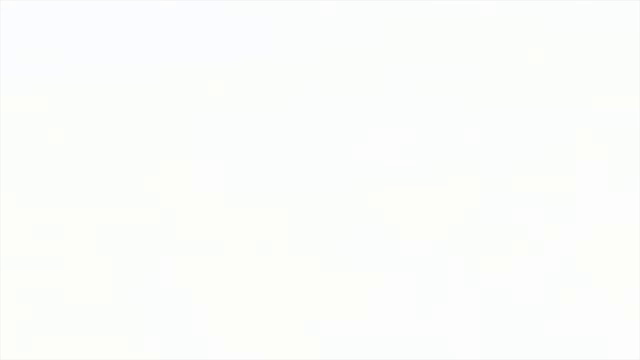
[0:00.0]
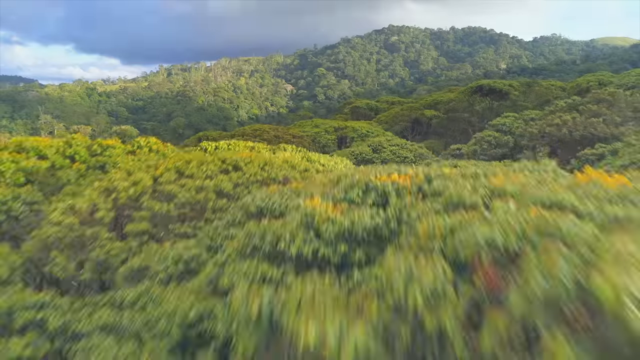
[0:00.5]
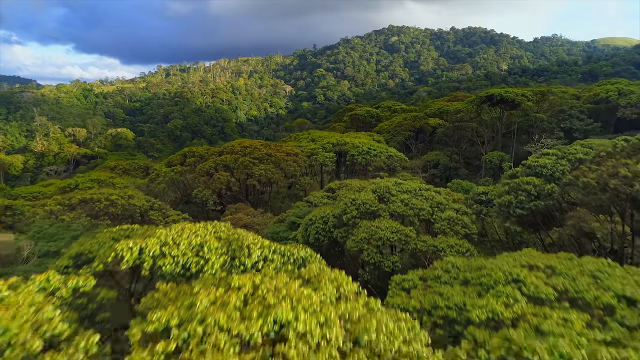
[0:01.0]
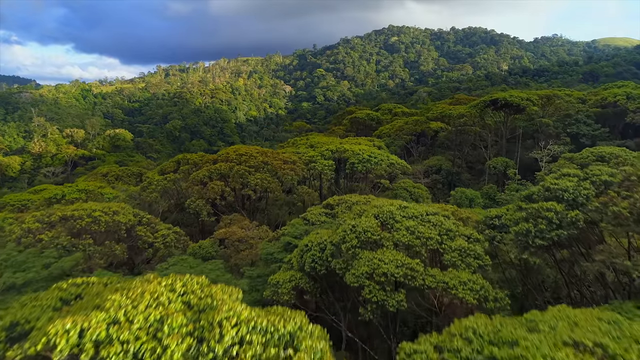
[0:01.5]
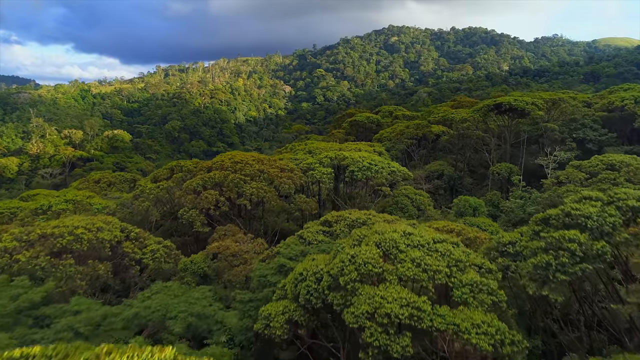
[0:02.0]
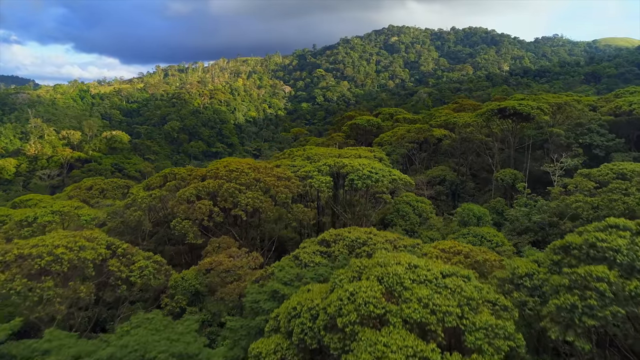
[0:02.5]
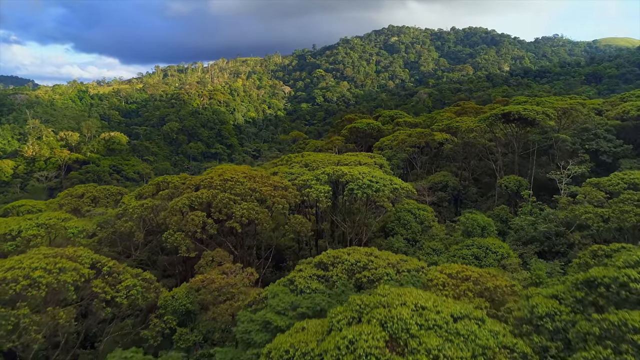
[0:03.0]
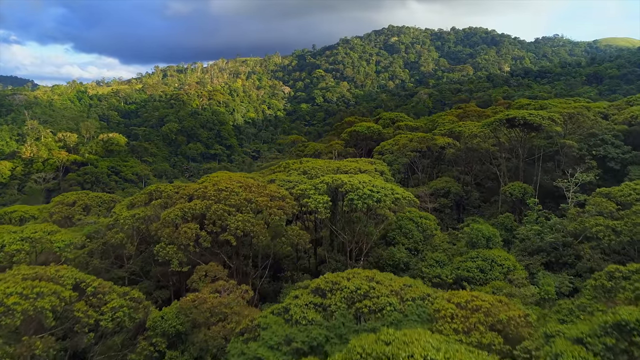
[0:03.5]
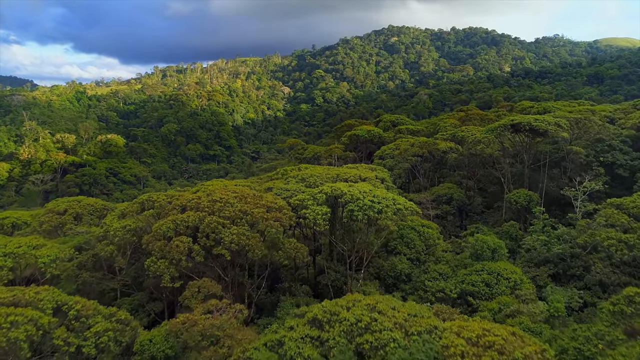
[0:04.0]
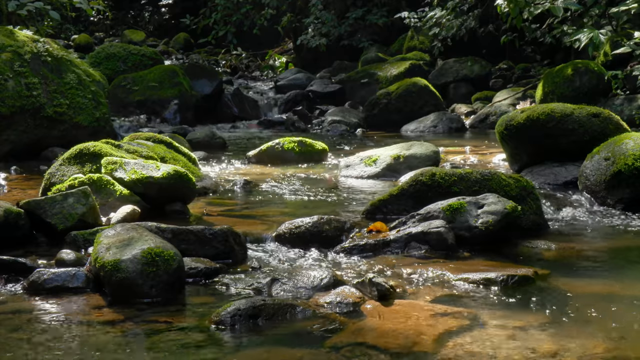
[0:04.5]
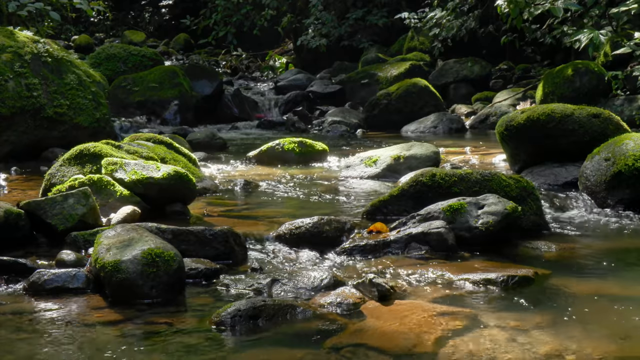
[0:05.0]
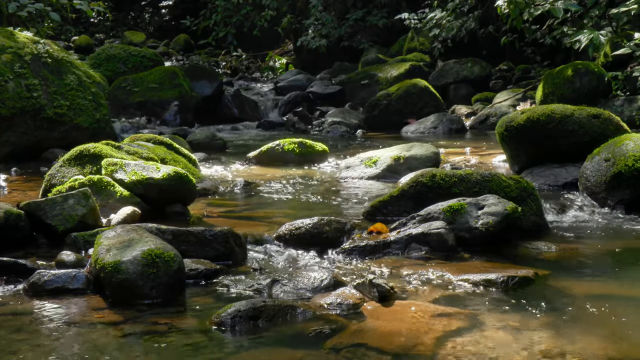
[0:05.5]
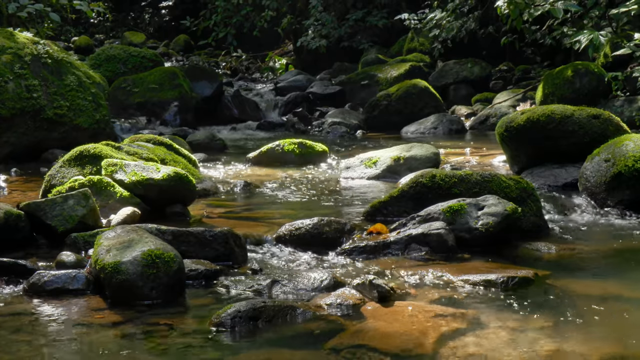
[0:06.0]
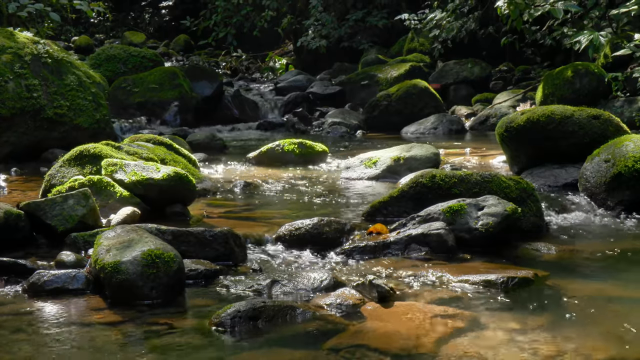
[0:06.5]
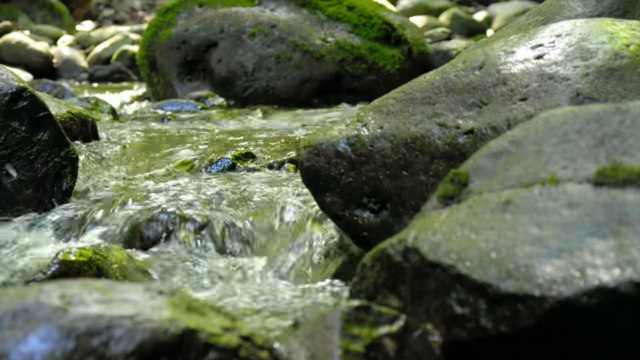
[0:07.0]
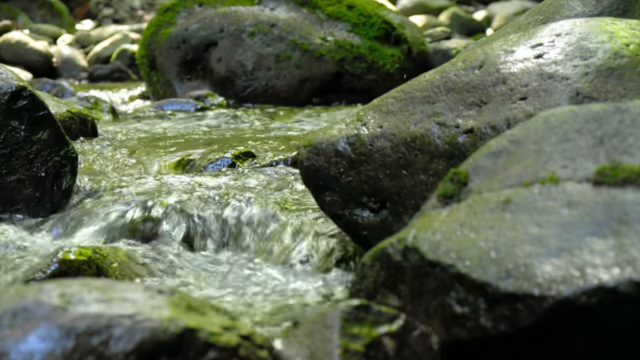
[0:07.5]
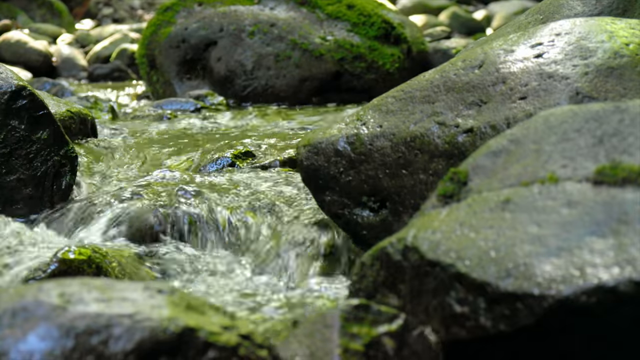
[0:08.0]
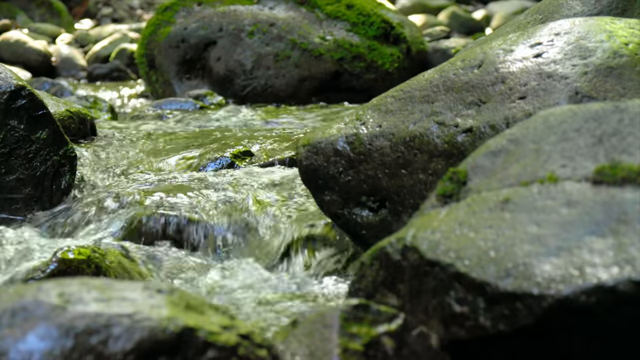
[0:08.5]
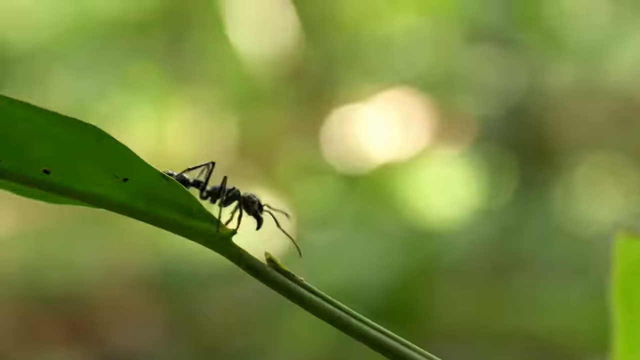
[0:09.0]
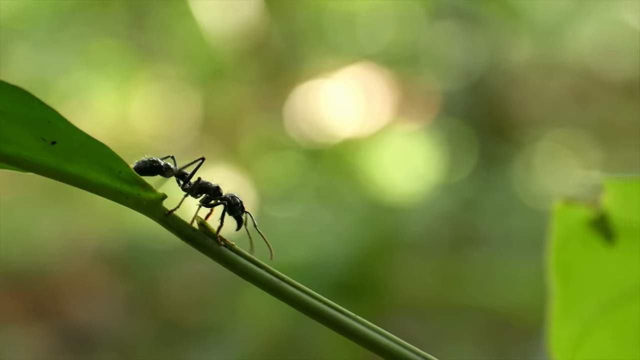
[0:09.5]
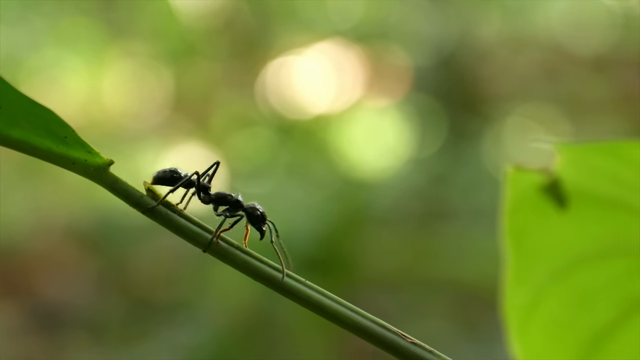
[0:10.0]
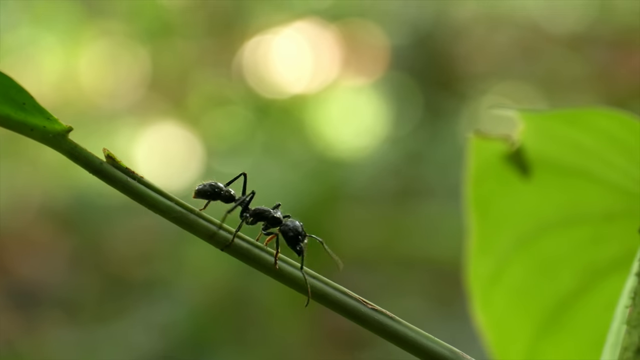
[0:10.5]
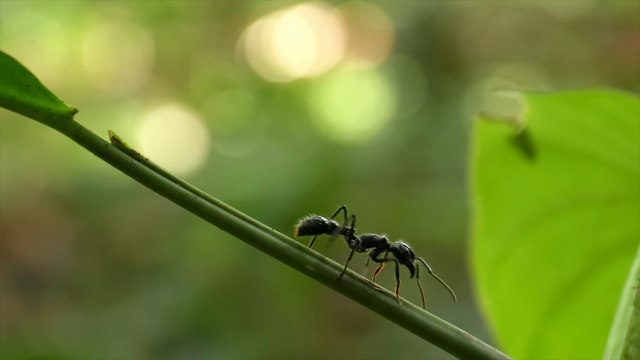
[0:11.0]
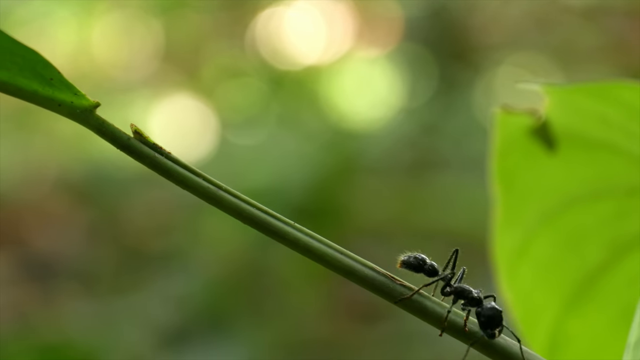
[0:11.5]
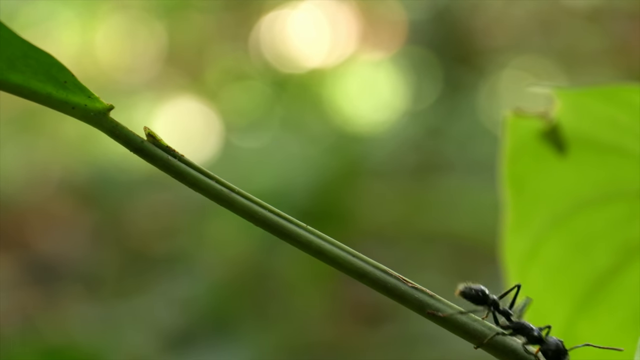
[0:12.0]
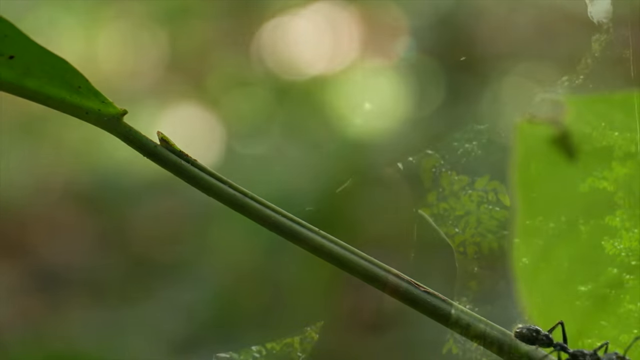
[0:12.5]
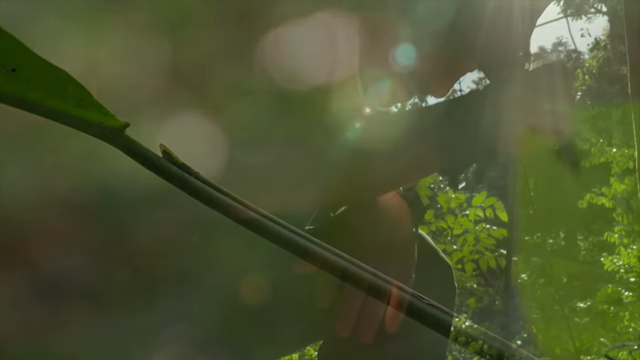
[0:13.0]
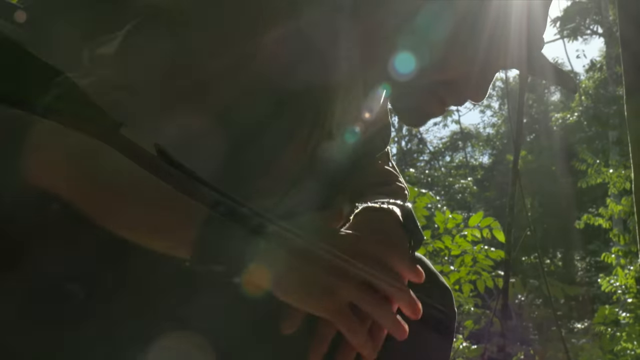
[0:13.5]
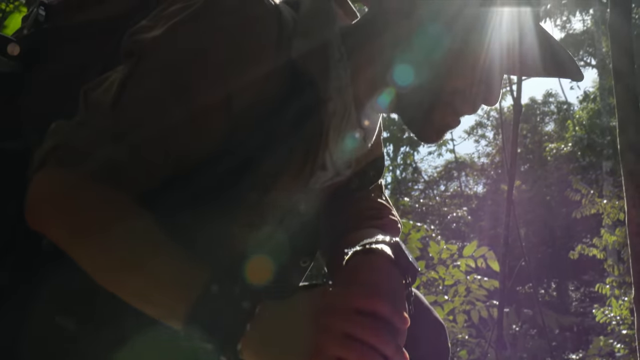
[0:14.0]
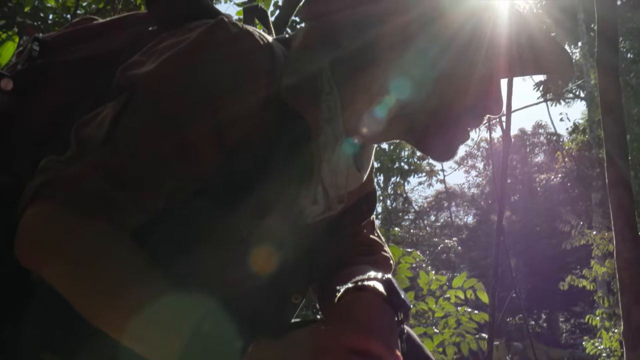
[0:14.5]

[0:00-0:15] Natural landscapes are shown. The view moves over treetops, then shows a stream of running water that looks clean and very clear. A close-up shows an ant moving through a leaf, then some sort of person with a hat is kind of resting within this environment. The person, who appears for a few seconds, seems to be hot and trying to cool down near the stream, so the climate looks tropical. Everything is very green and leafy, the sun is shining, the sky is mostly clear, and it looks warm. The setting looks very pristine: no man-made objects or signs of civilization are visible anywhere nearby. It is unclear whether it is a jungle or a forest, but it is very natural.